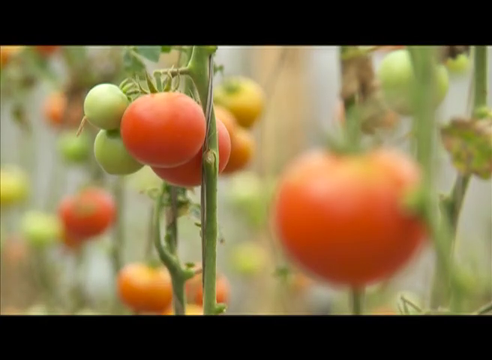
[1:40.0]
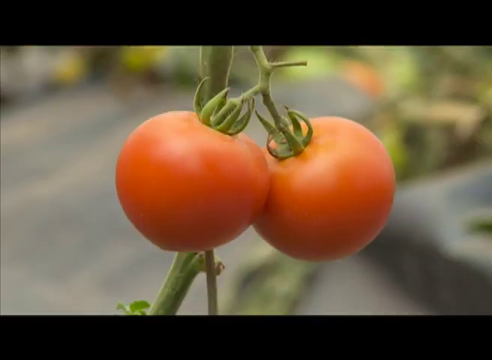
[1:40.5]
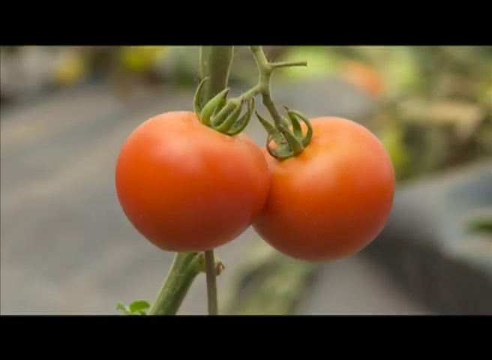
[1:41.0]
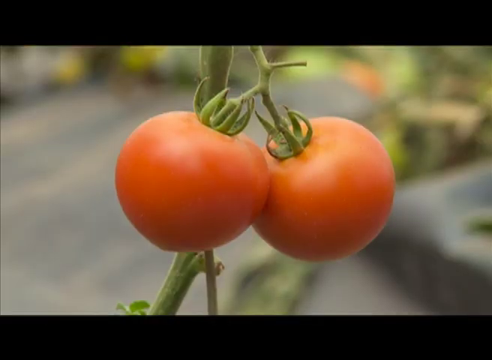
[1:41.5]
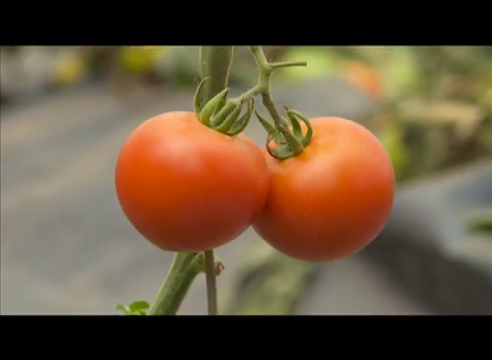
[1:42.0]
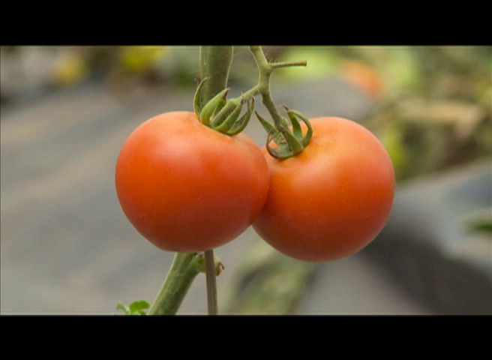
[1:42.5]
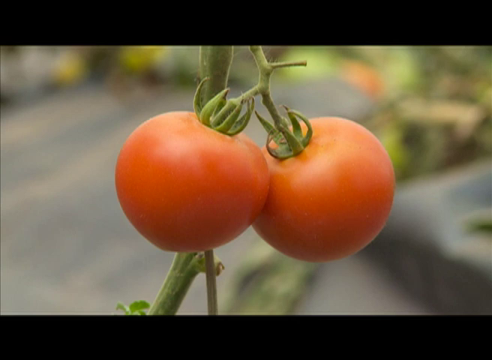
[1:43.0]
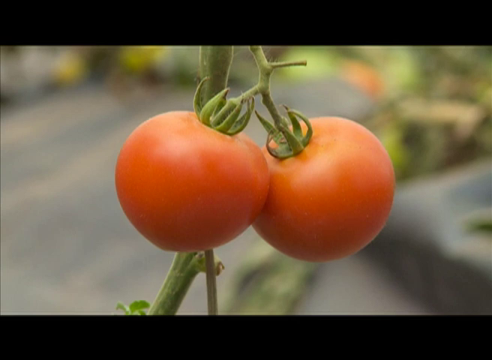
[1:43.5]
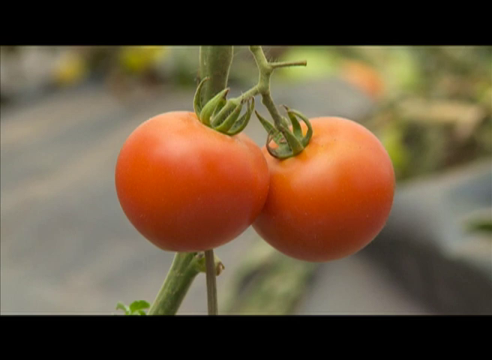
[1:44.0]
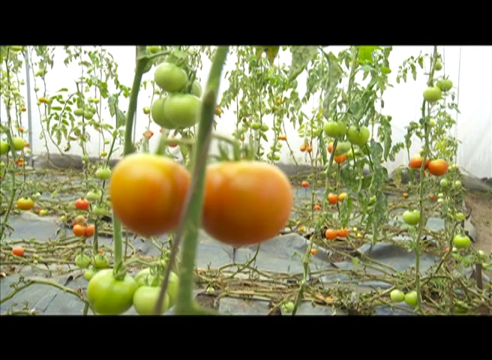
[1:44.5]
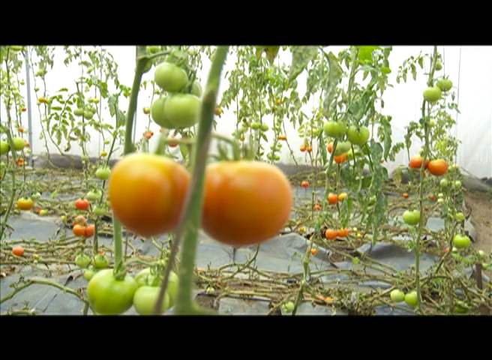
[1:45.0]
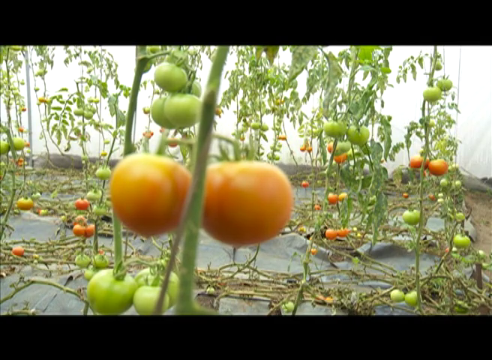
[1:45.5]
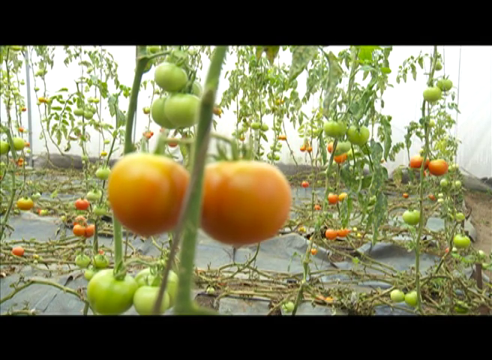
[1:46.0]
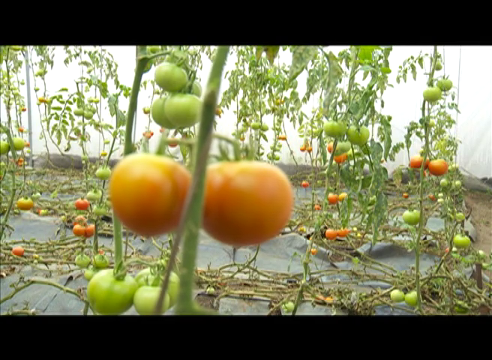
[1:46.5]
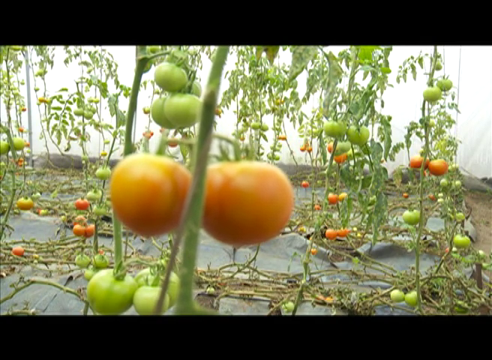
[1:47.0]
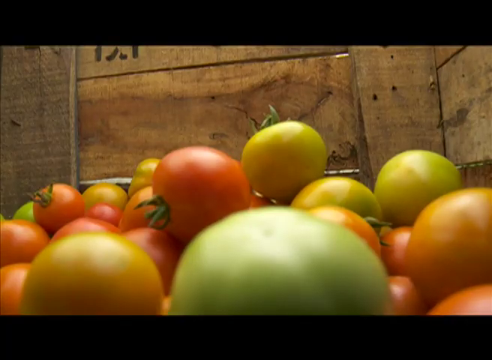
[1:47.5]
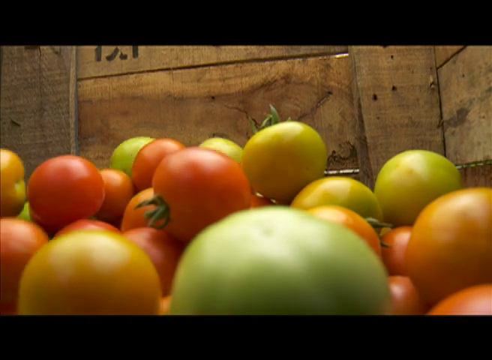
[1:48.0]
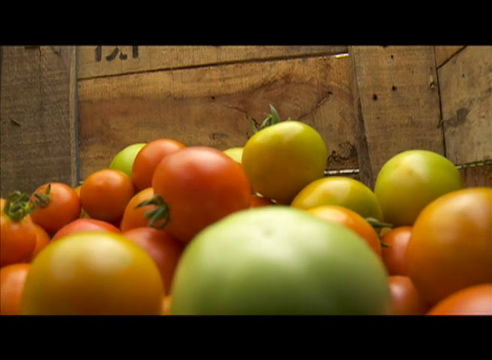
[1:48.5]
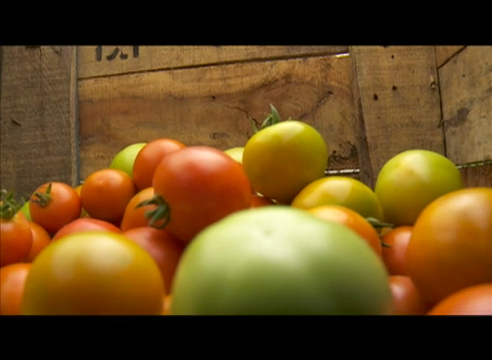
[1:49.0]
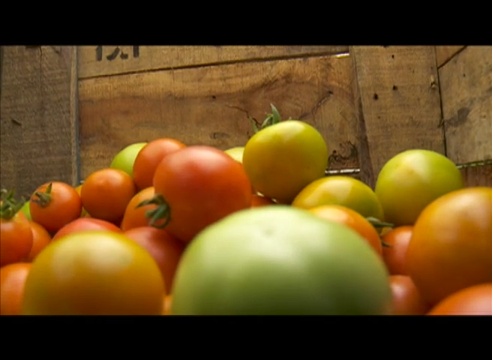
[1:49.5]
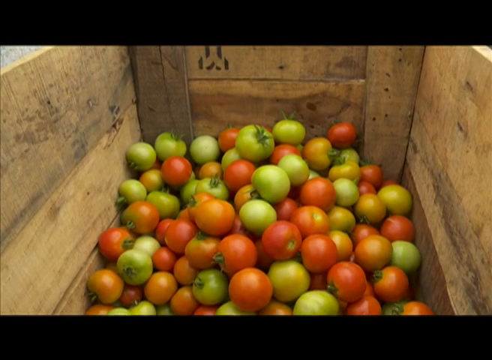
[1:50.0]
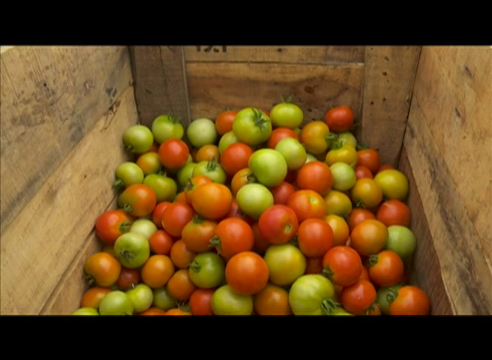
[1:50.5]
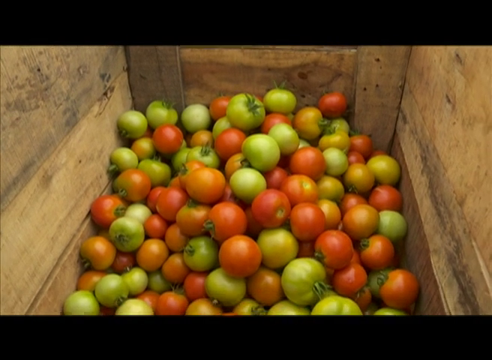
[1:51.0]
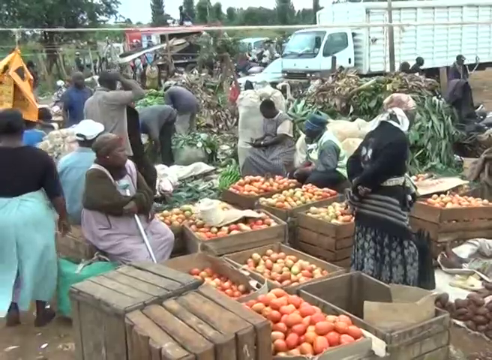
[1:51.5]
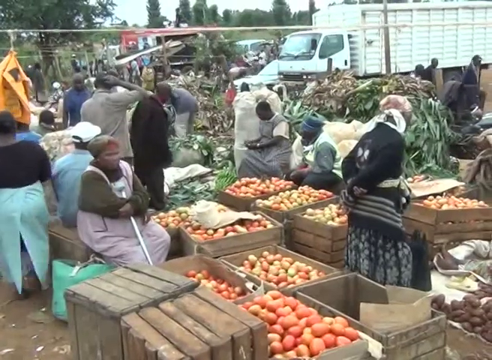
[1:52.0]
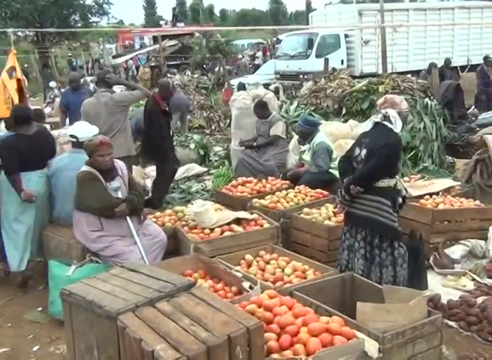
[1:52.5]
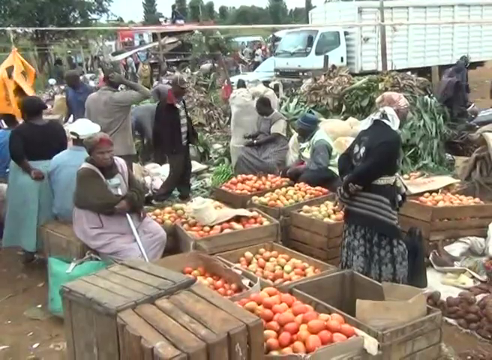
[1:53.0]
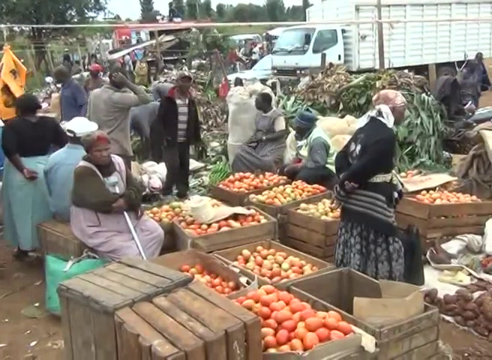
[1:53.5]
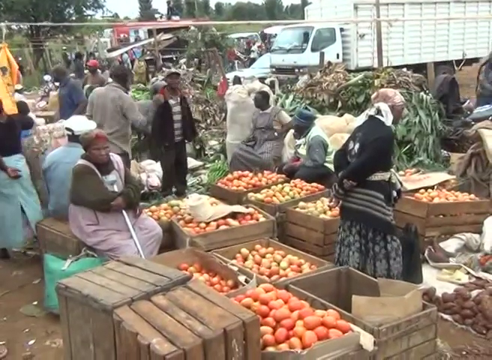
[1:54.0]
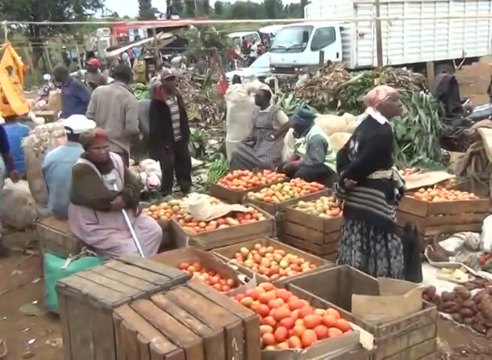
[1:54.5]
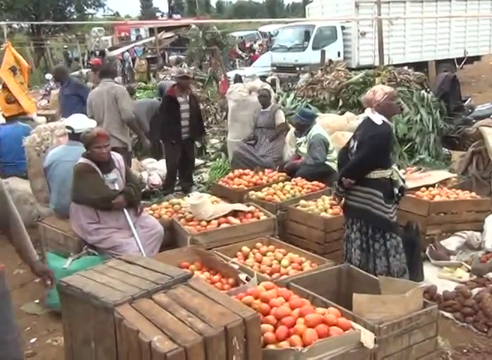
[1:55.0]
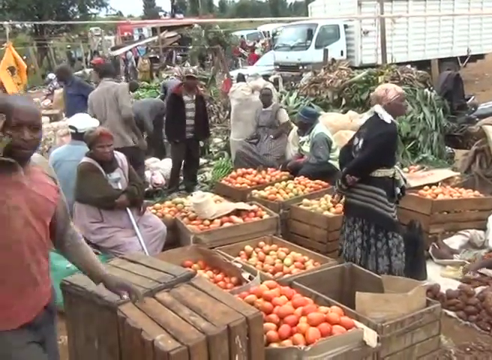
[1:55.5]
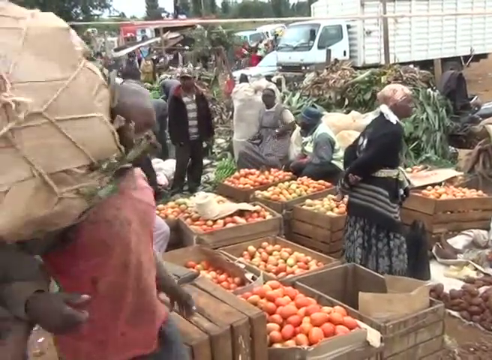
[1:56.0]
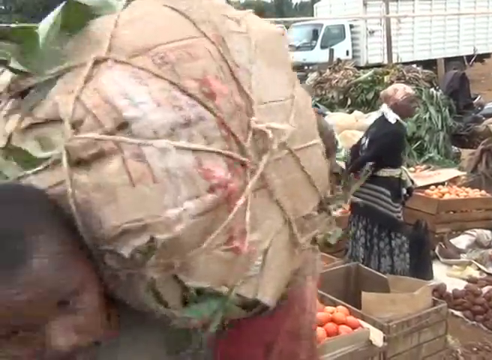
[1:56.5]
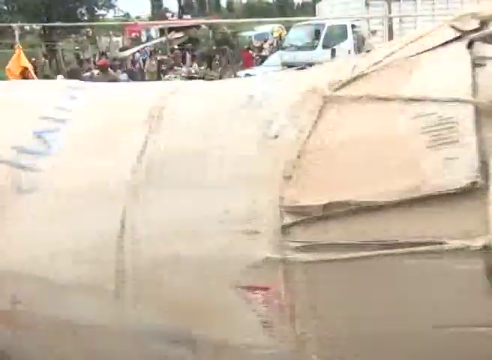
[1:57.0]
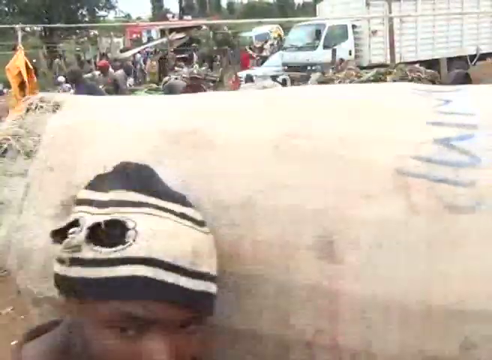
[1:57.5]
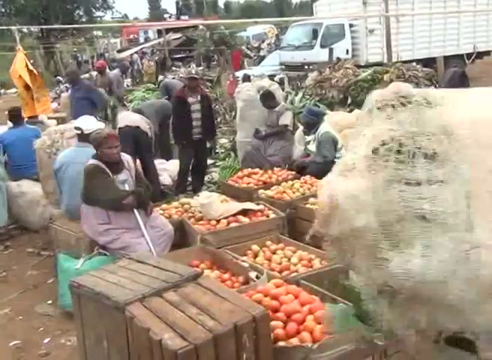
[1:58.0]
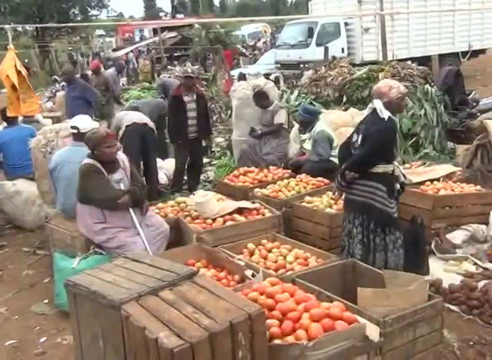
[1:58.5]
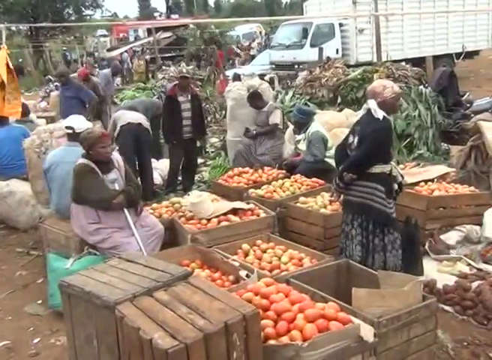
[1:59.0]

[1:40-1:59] A vine has two red tomatoes hanging from it. In another scene, a large number of vines all have tomatoes hanging from them, most of them green and some red, and a black tarp covers the ground at the bottom. Next, the inside of a crate is shown as tomatoes are thrown into it; some are green, some red and others orange. The scene then moves to what looks like a flea market with many crates full of tomatoes and people walking around, and a white truck in the background. One woman in a purple dress sits on a crate, and another woman wearing a black coat over a black and white dress stands in front of a crate. A man walks by in the foreground, seemingly carrying something wrapped in brown paper.